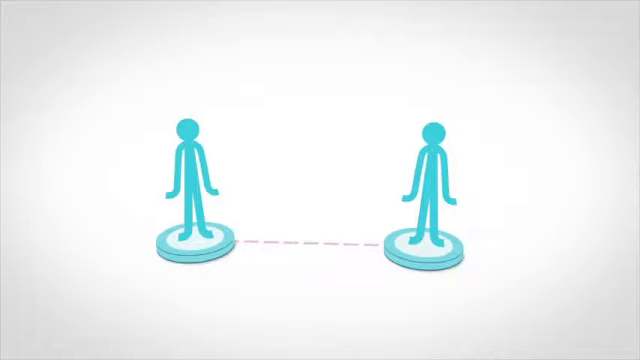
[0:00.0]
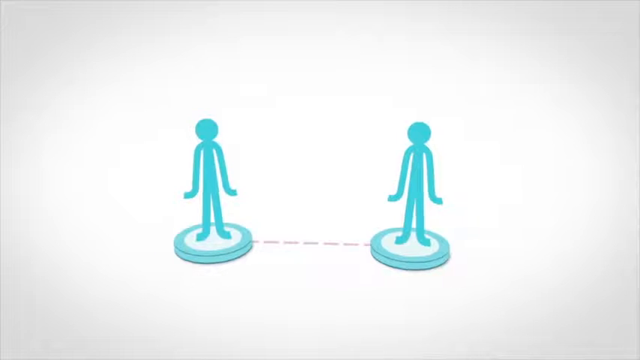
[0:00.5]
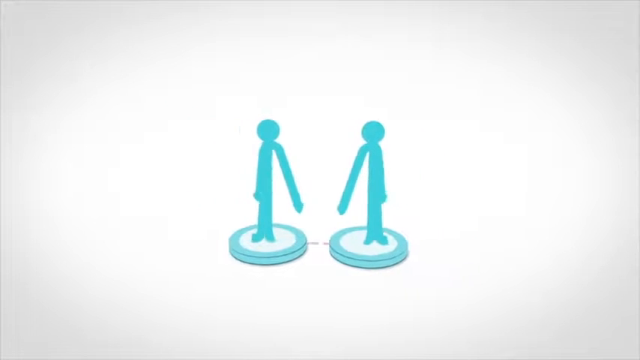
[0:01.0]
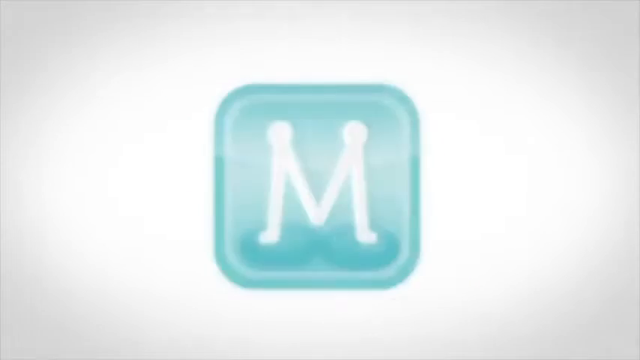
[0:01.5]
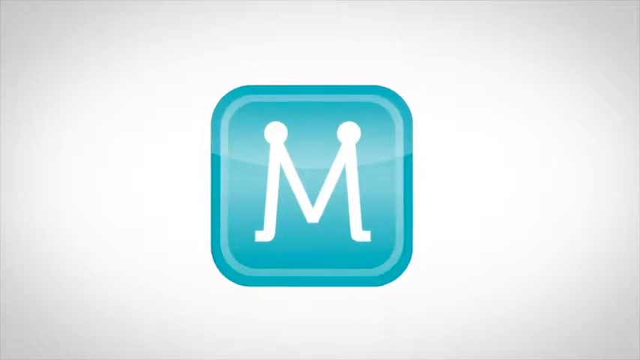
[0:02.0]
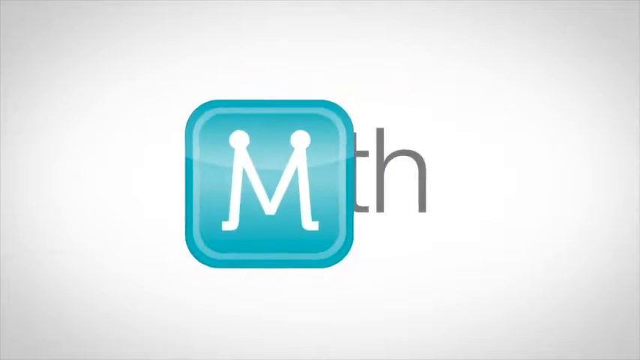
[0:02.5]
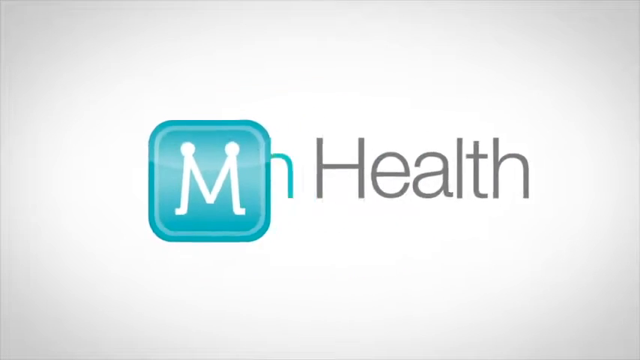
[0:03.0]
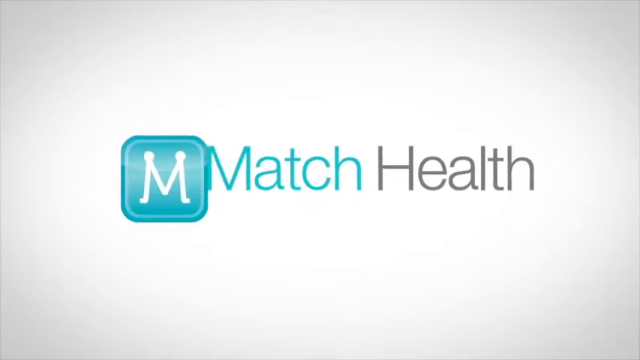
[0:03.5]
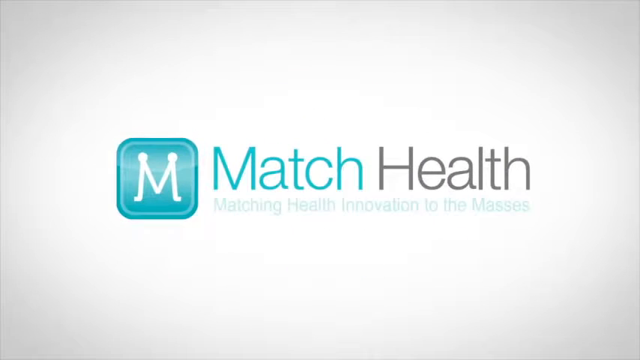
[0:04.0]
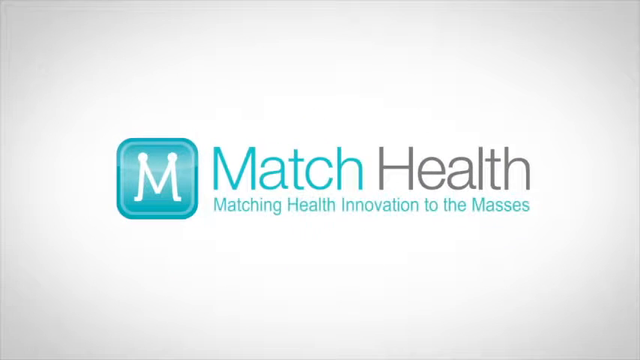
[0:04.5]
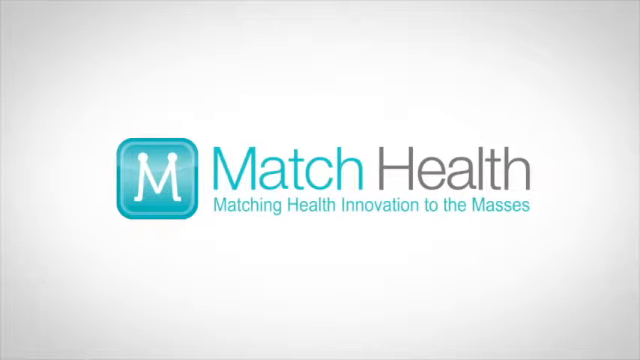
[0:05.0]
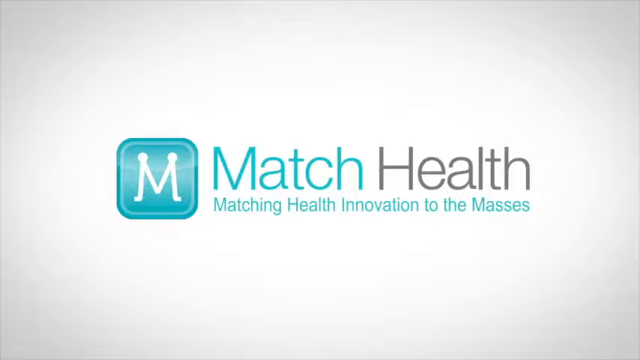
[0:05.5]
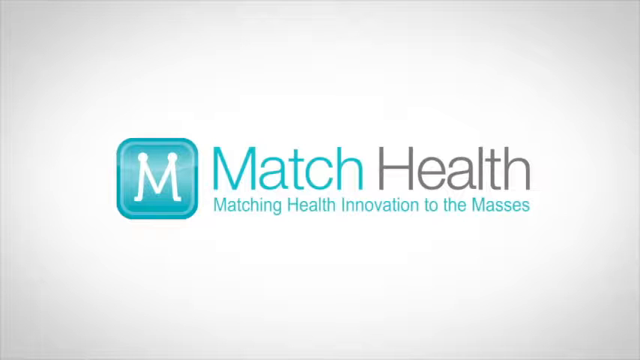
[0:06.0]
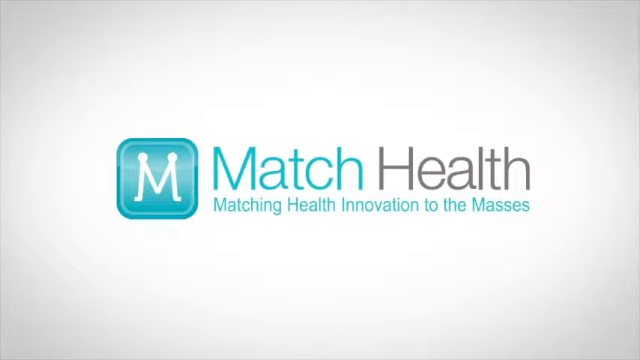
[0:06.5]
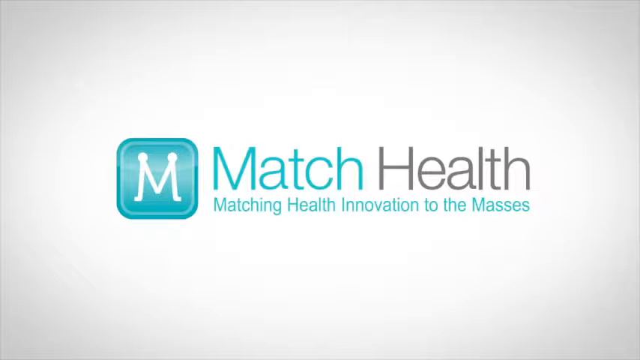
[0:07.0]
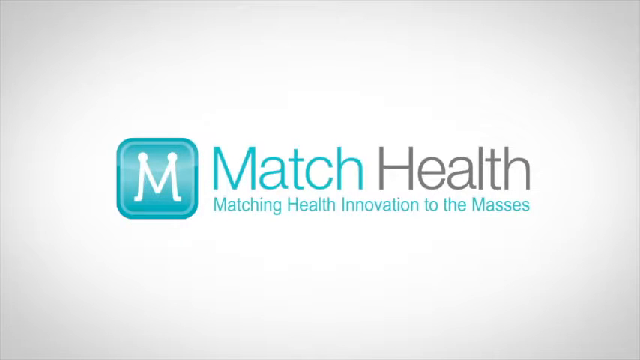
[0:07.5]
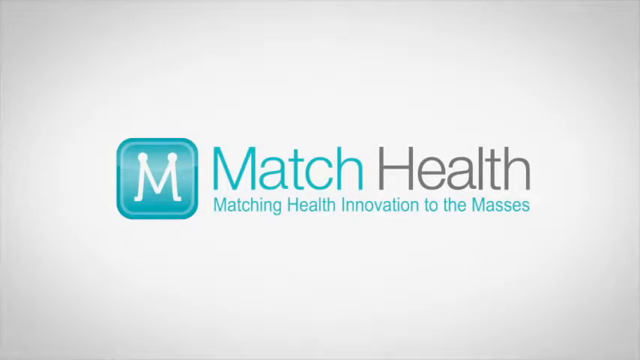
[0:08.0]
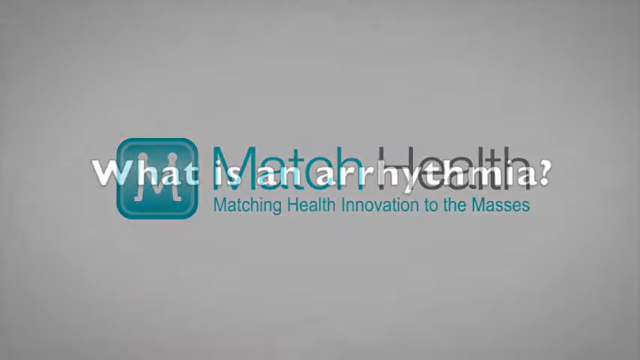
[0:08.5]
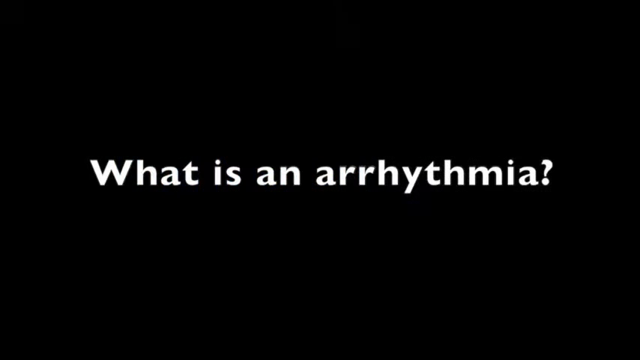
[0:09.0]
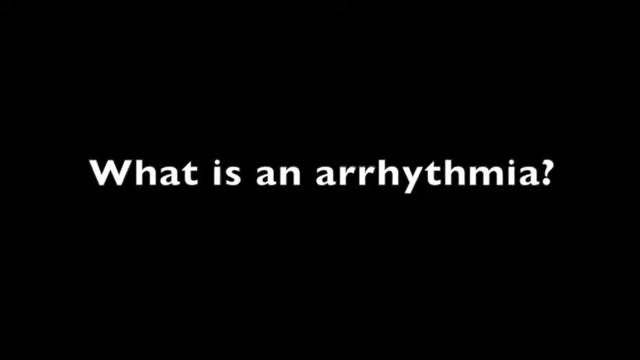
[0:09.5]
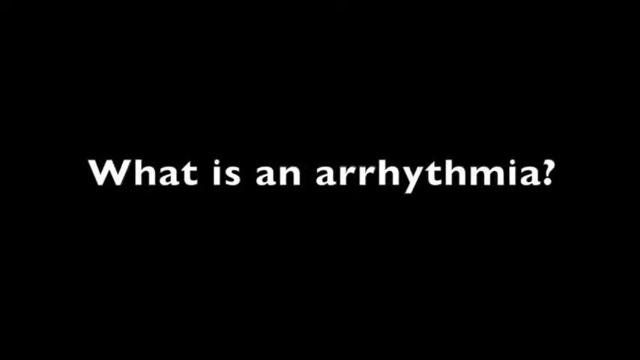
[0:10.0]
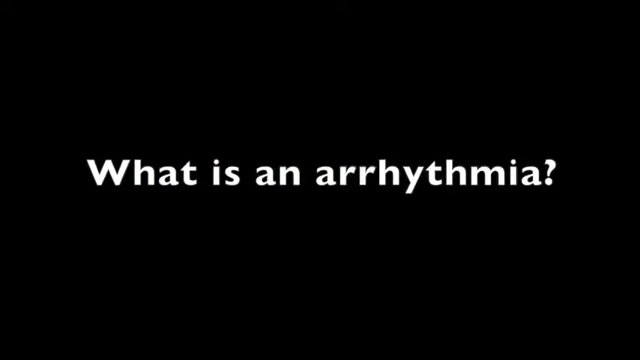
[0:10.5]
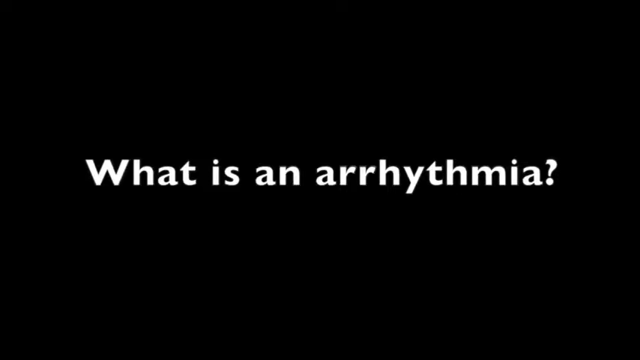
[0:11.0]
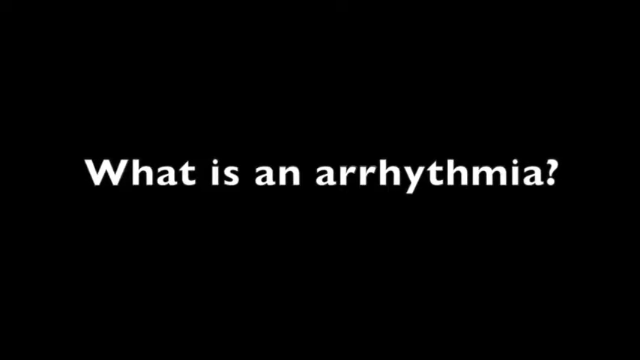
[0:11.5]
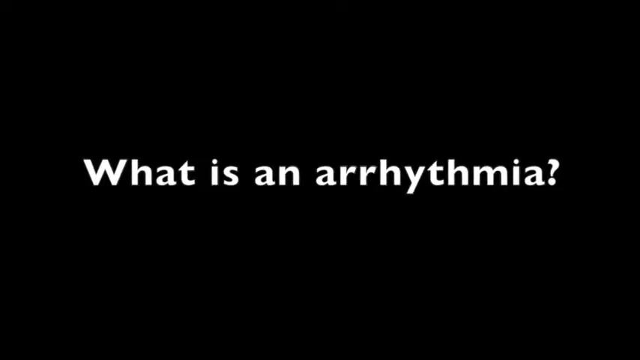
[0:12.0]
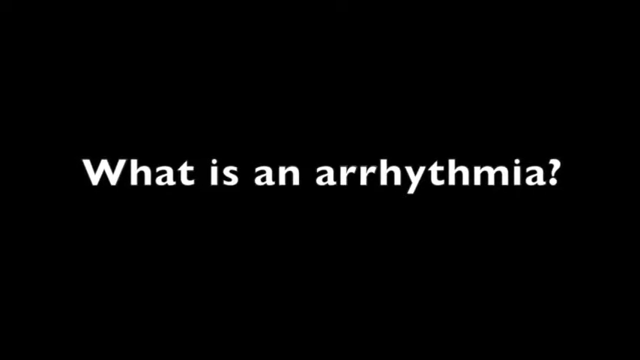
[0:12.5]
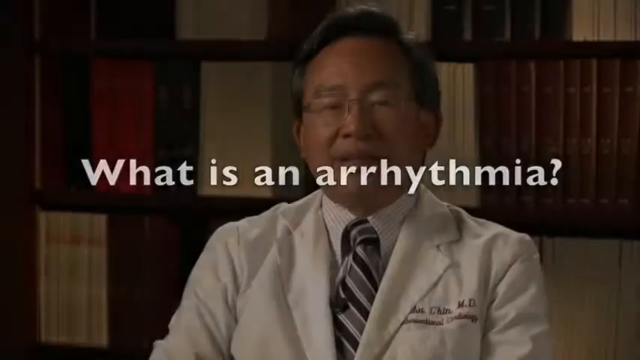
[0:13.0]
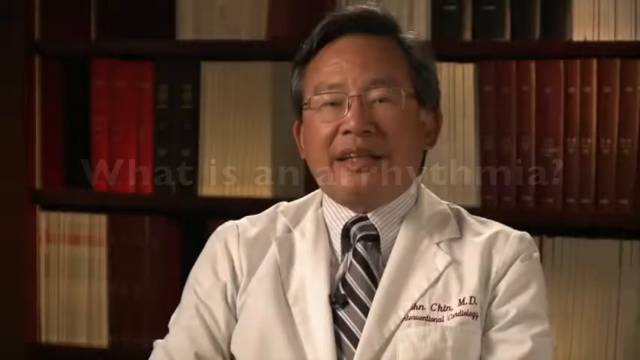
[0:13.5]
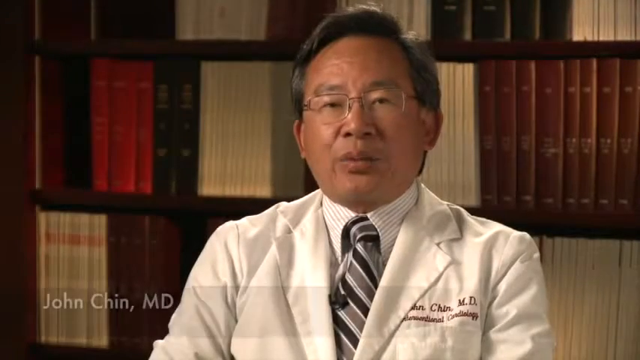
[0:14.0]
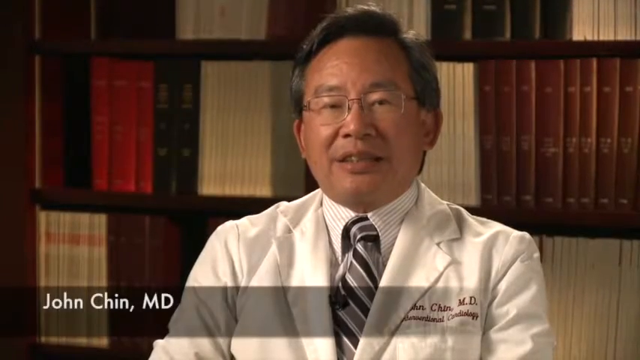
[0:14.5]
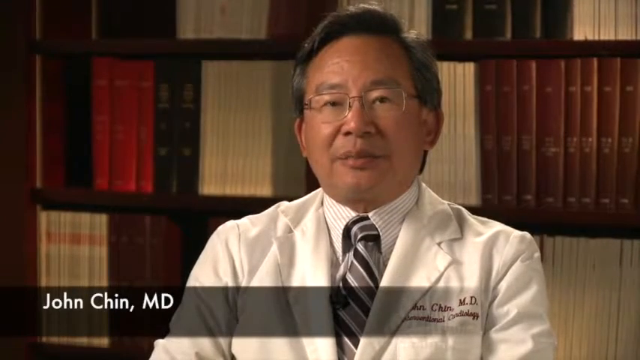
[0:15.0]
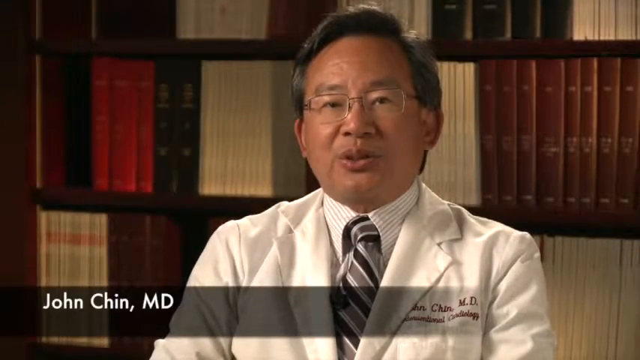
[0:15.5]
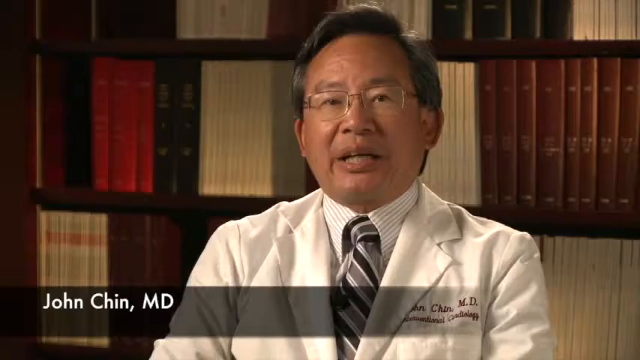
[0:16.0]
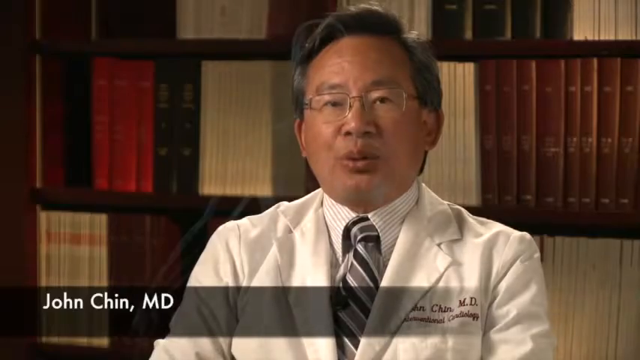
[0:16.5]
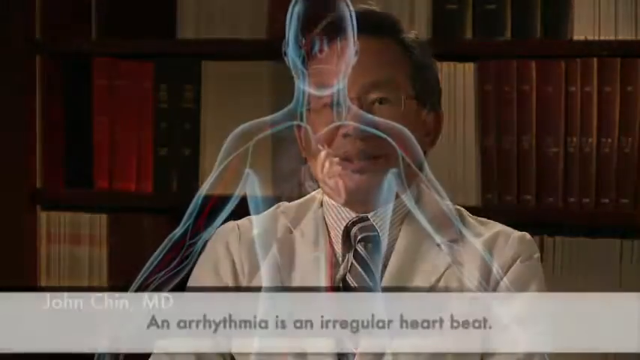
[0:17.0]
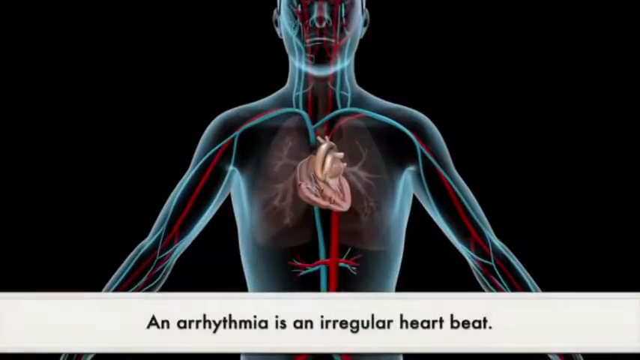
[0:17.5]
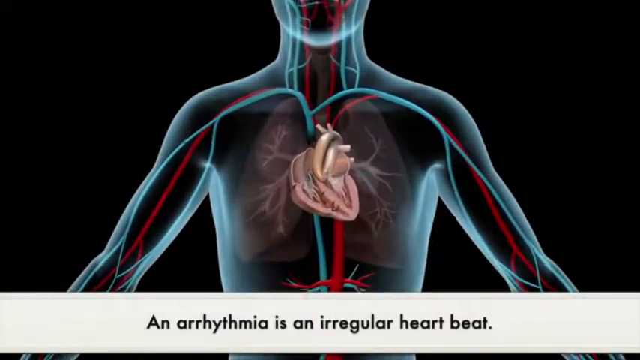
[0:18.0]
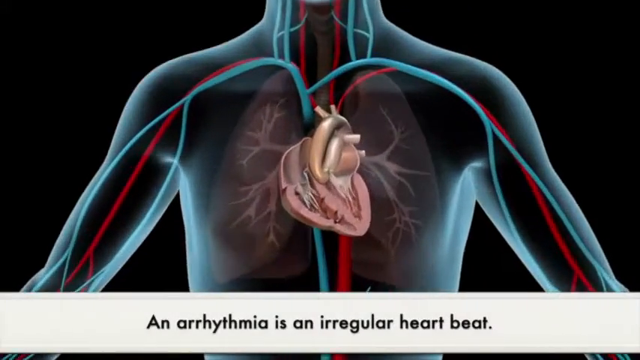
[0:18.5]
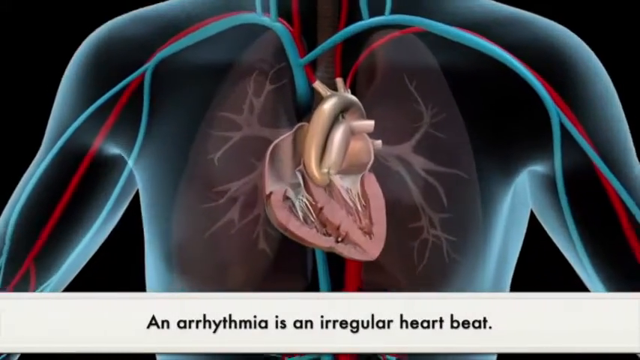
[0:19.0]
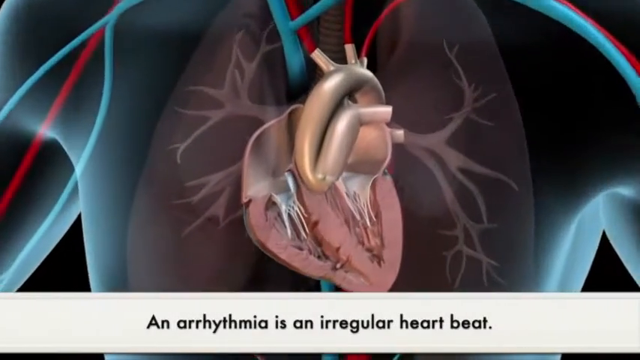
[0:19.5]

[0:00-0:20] An animation opens against a white background. On the right-hand side is a blue silhouette of a person on a pedestal, and on the left-hand side is a different silhouette of a person on a pedestal. The person on the left has an arm sticking out toward the right, and the person on the right has an arm sticking out toward the left. The two figures slowly slide together until their arms touch to make an M. This is transformed into a logo with a blue square around an M. The square moves slowly right and gets smaller until it fits beside a company name which reads "matching health innovation to the masses." The screen fades out to a black screen with white writing that reads "what is an arrhythmia?" When this fades out, it is replaced by a video of a doctor with bookcases behind him. He is sitting fully facing the screen, wearing the white jacket of a doctor. A text box along the bottom labels him as "John Chin MD." He speaks calmly, not moving his hands, in an apparently measured tone.